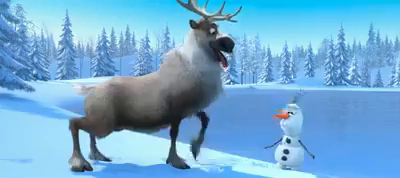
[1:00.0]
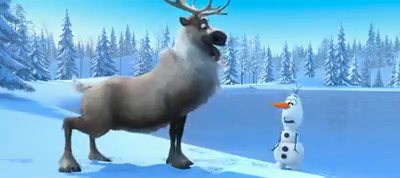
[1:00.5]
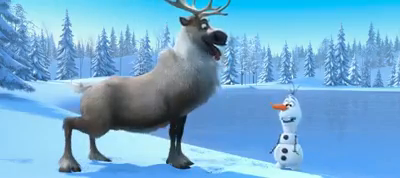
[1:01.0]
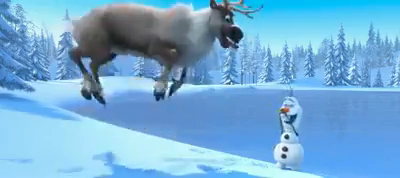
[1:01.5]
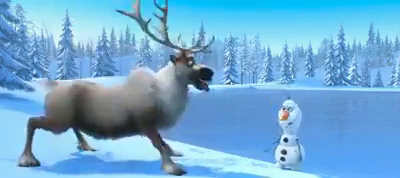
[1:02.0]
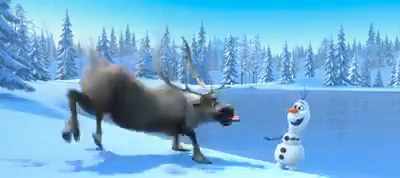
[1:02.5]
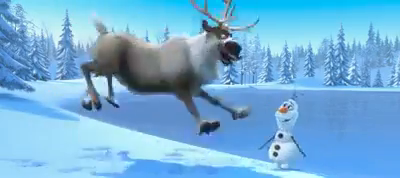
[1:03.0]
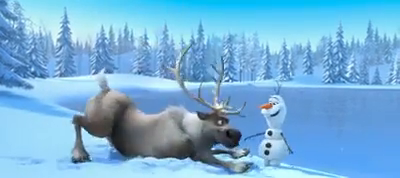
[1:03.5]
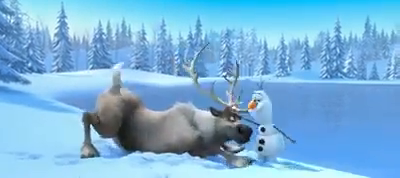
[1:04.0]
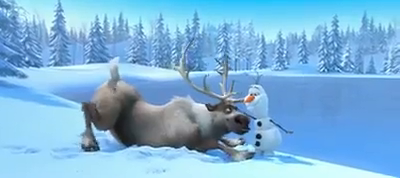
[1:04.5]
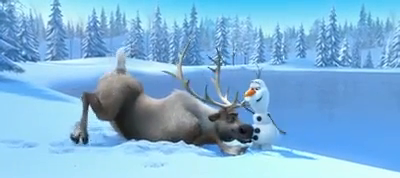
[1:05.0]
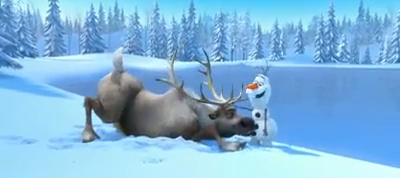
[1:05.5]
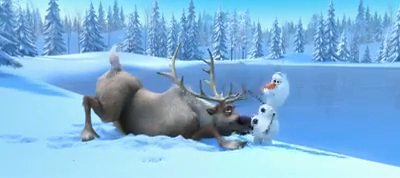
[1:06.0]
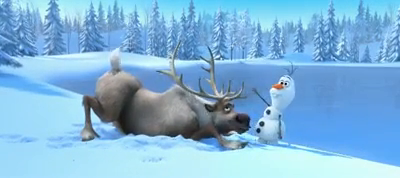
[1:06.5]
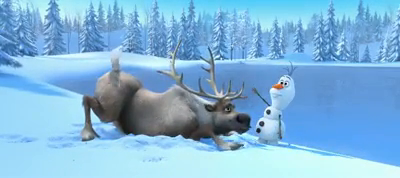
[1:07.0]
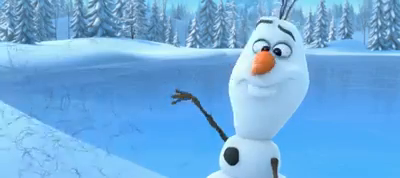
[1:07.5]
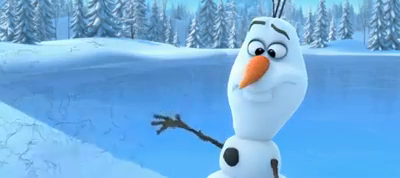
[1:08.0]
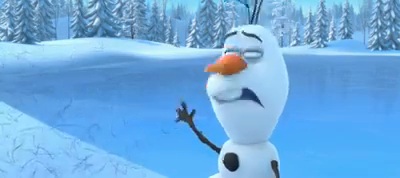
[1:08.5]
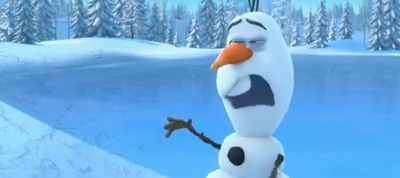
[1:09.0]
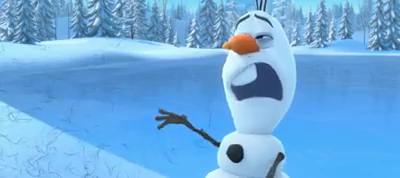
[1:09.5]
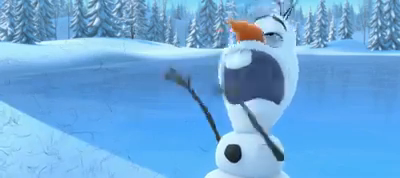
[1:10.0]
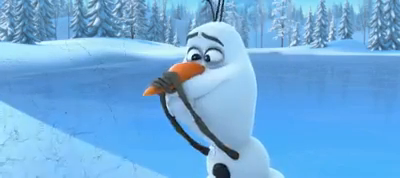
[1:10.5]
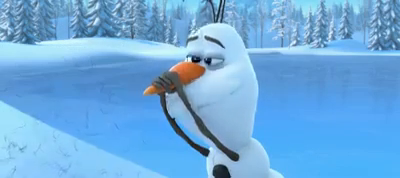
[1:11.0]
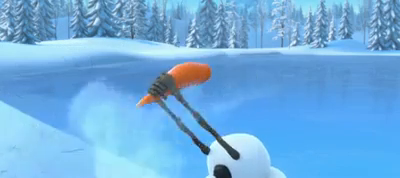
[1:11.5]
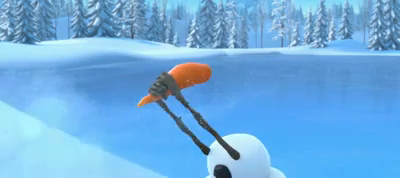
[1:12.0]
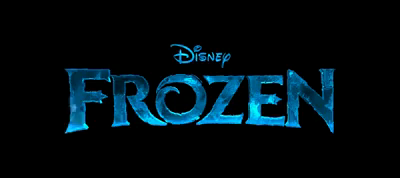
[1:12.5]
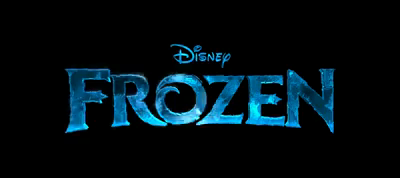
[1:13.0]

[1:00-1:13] The snowman pets the top of the moose's head between its antlers, and the moose moves its back leg back and forth very fast. The snowman looks like he is about to sneeze again, but this time he catches his nose. His arms and nose stay in the frame while his head flies far backward. At the very end, the movie title Frozen appears.